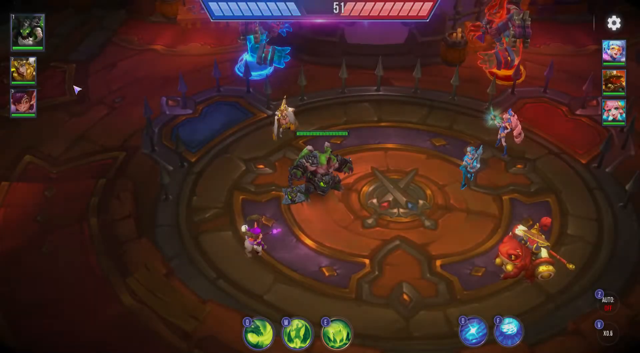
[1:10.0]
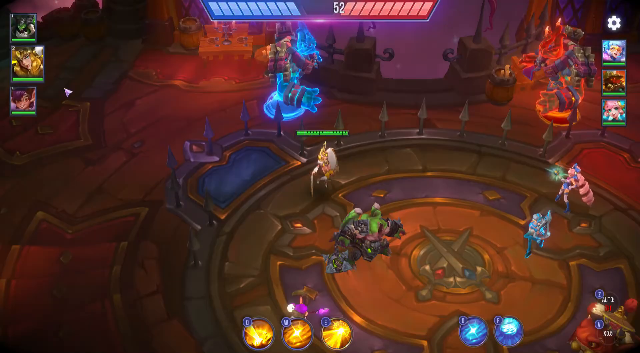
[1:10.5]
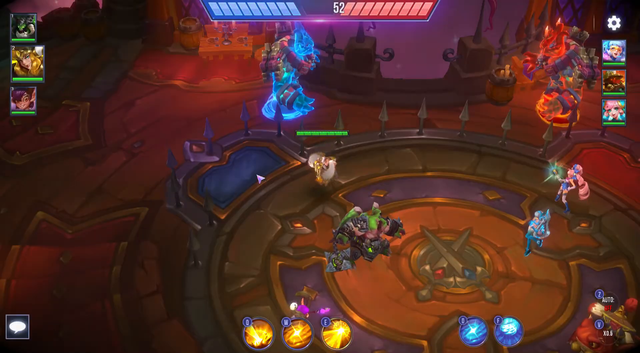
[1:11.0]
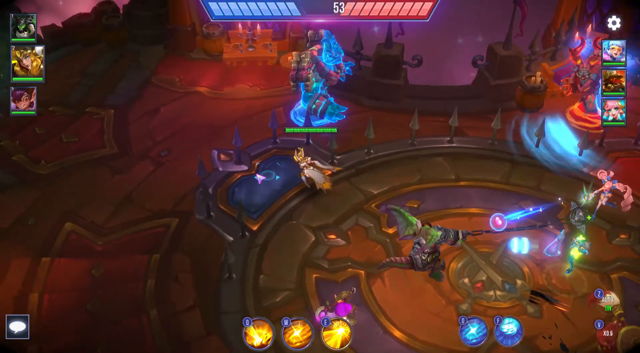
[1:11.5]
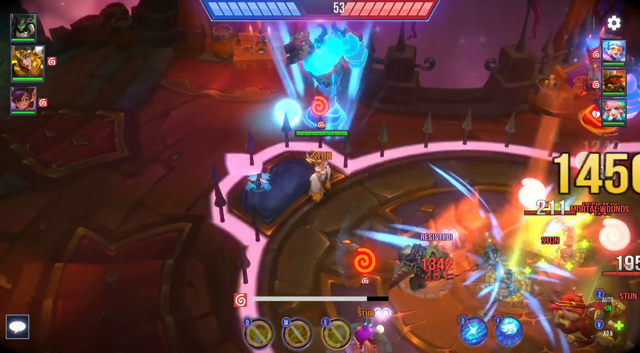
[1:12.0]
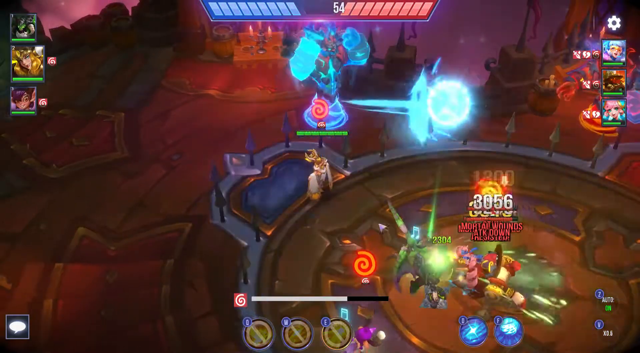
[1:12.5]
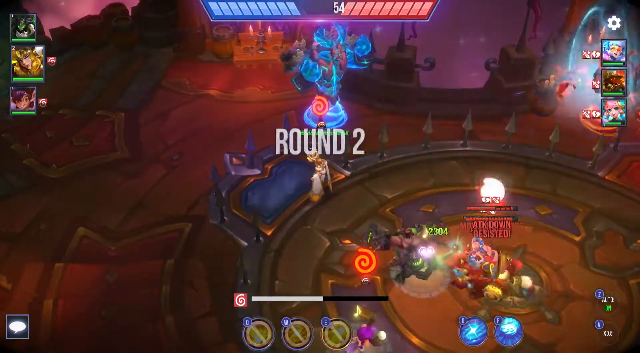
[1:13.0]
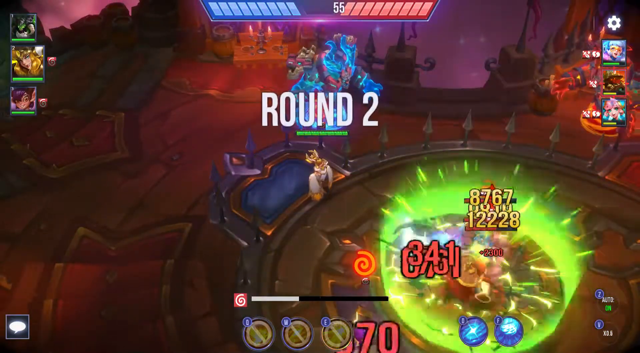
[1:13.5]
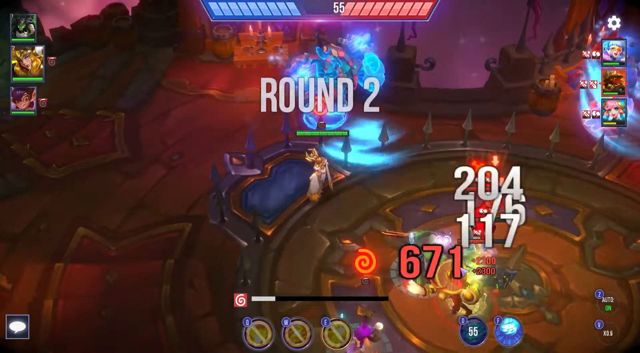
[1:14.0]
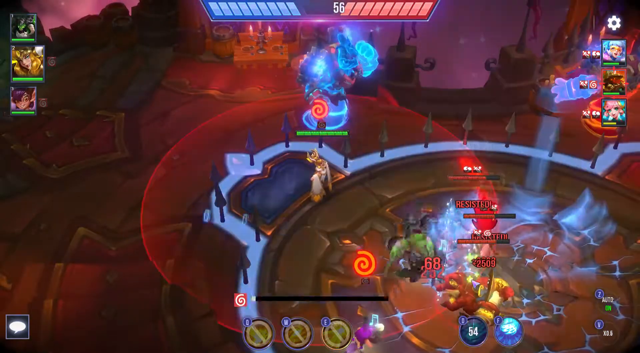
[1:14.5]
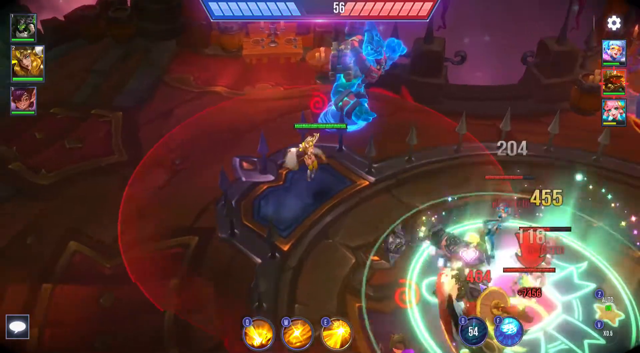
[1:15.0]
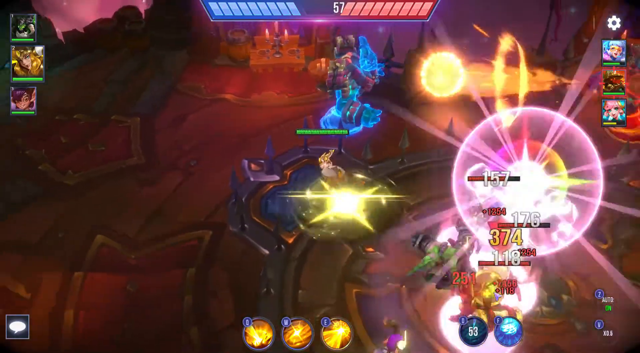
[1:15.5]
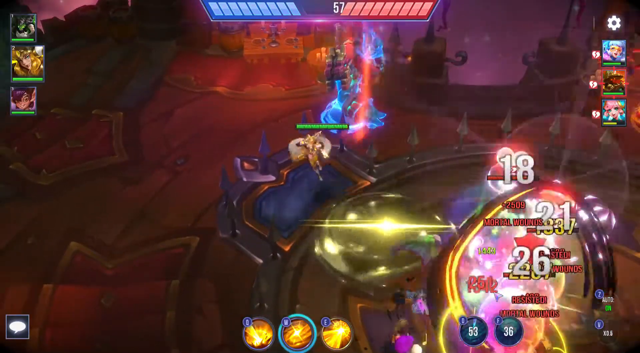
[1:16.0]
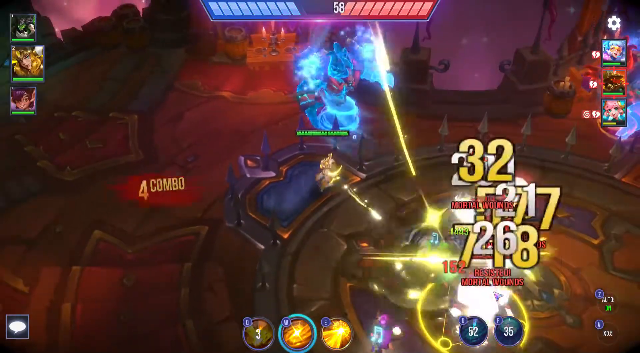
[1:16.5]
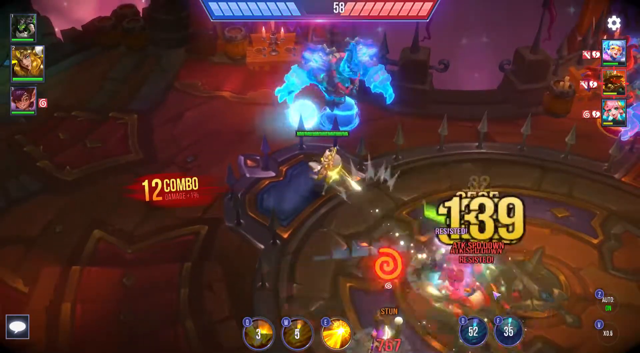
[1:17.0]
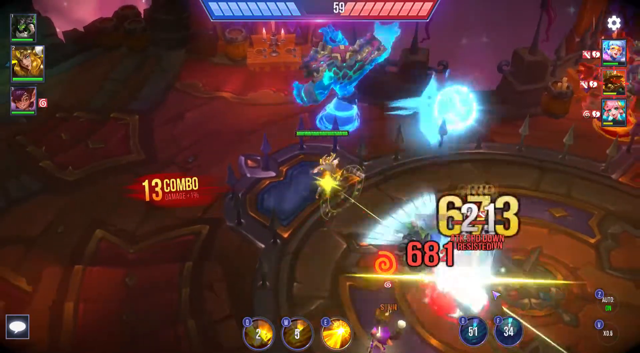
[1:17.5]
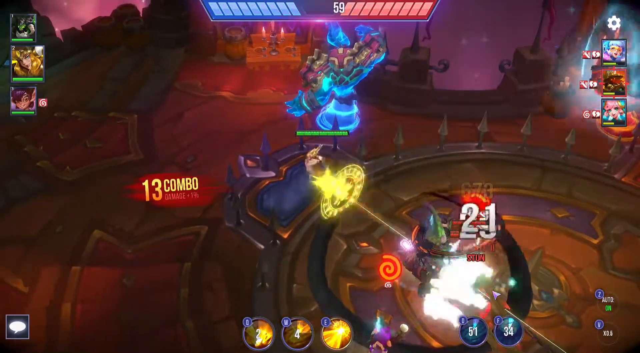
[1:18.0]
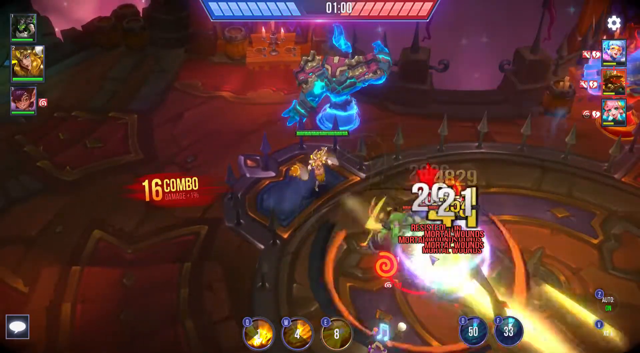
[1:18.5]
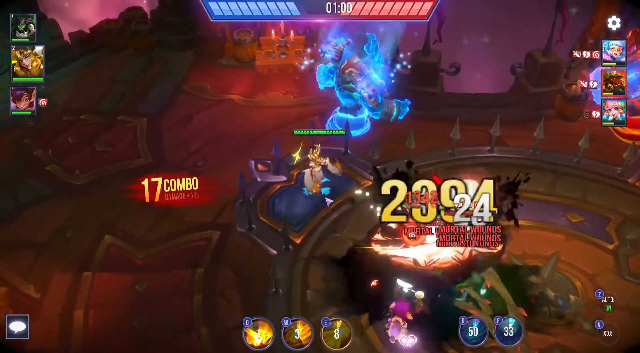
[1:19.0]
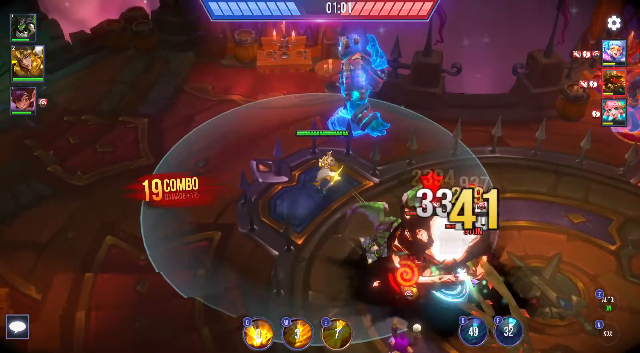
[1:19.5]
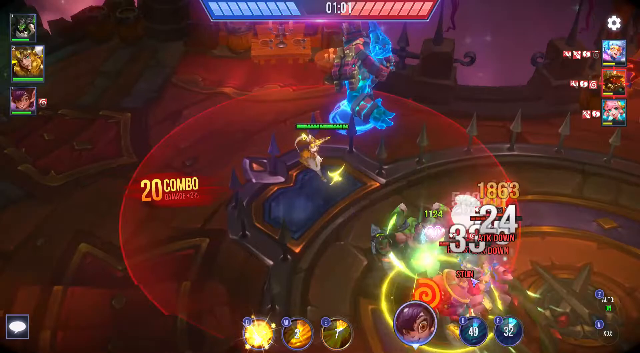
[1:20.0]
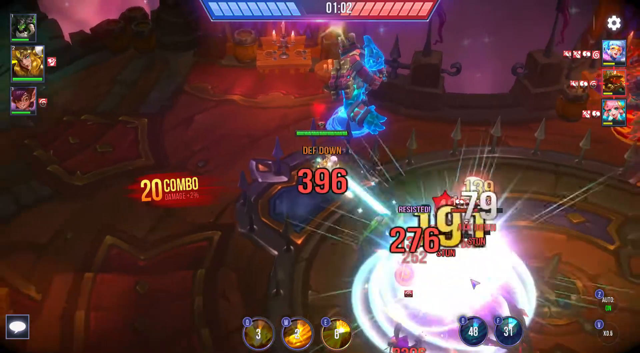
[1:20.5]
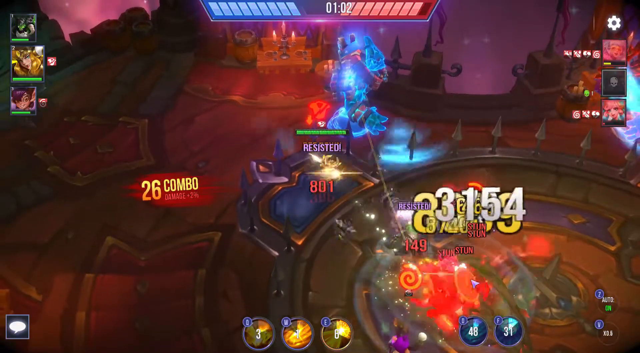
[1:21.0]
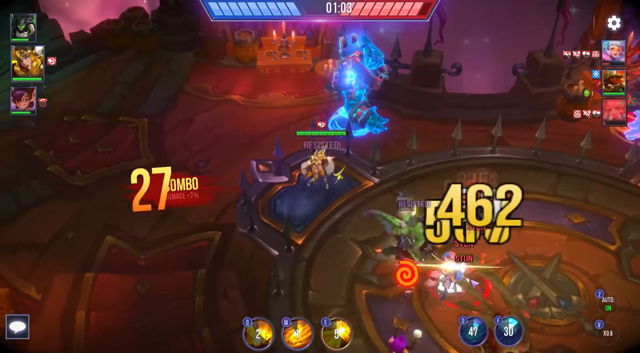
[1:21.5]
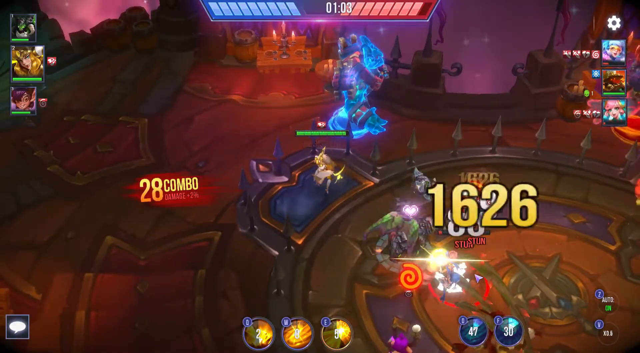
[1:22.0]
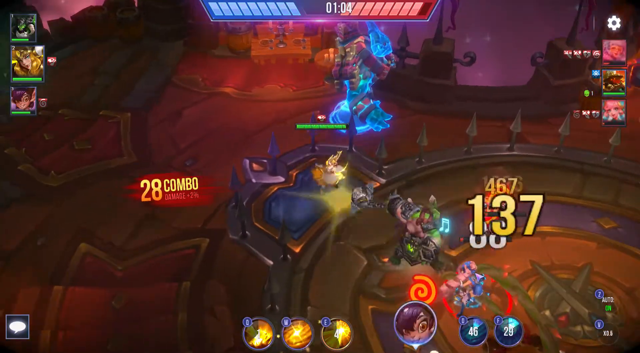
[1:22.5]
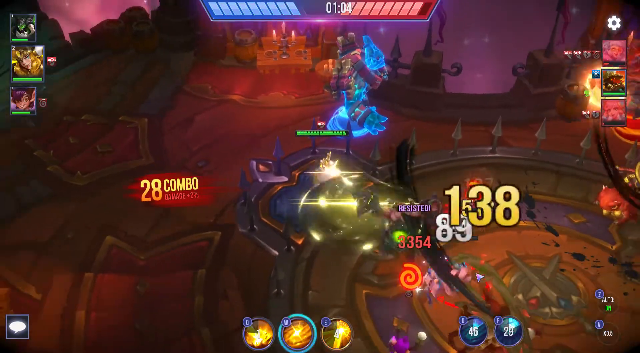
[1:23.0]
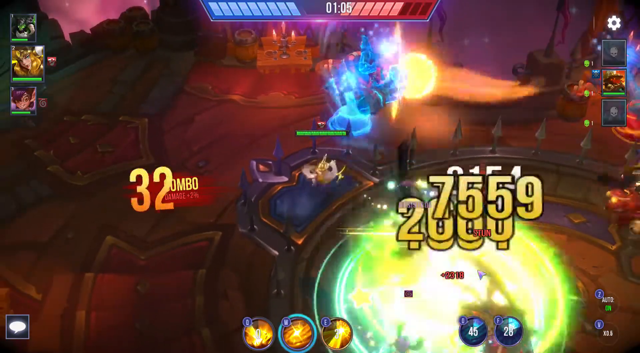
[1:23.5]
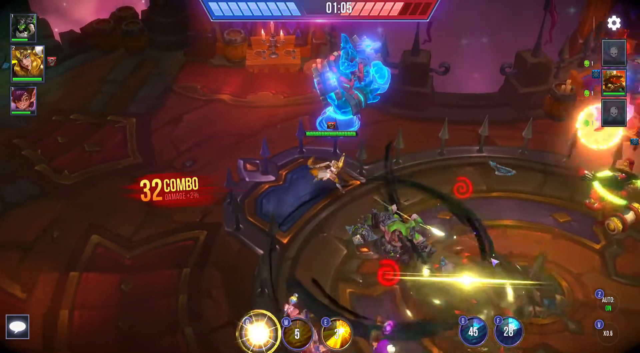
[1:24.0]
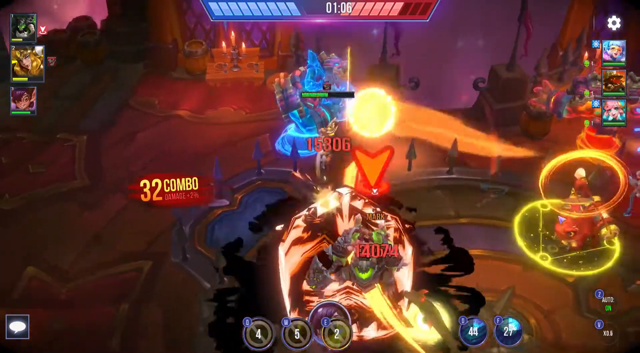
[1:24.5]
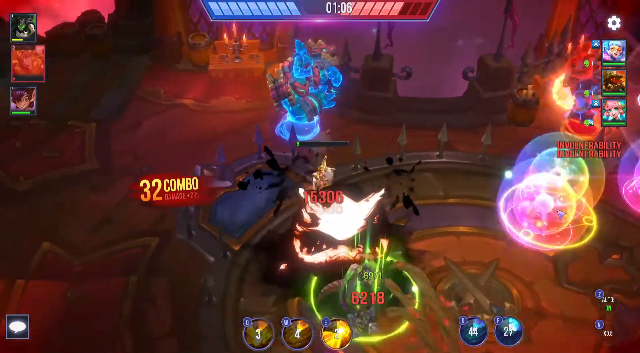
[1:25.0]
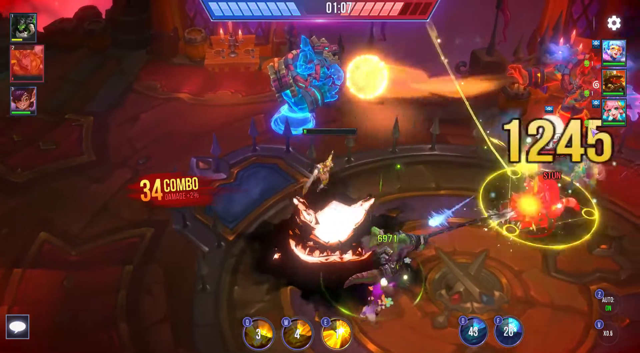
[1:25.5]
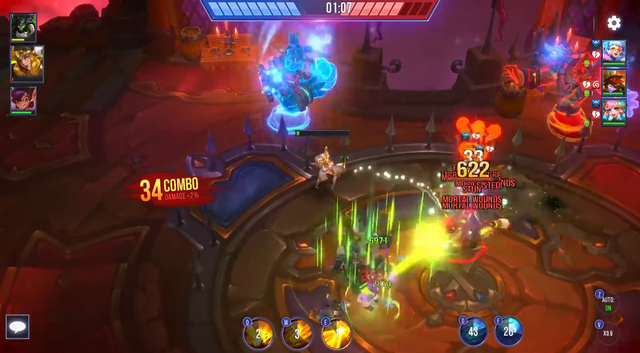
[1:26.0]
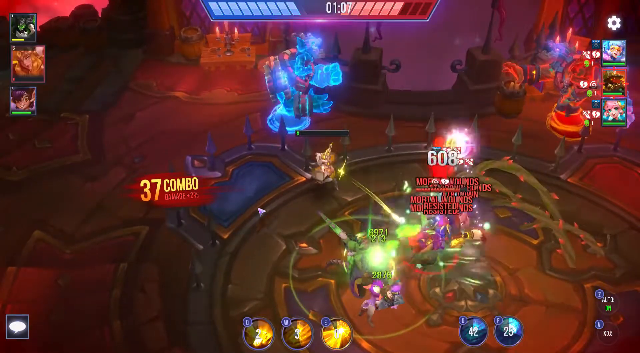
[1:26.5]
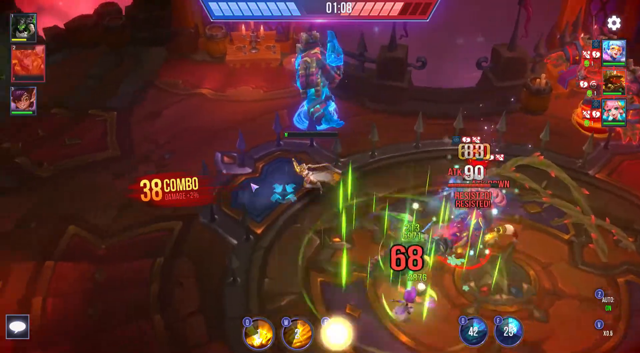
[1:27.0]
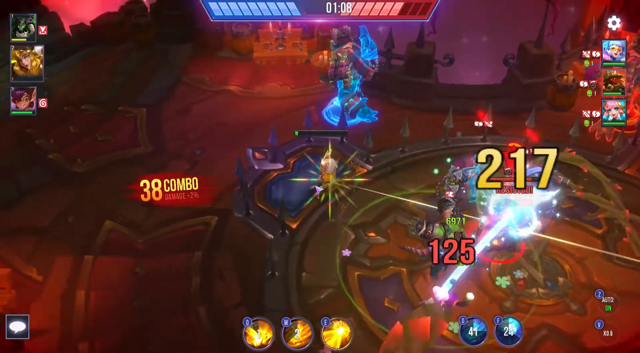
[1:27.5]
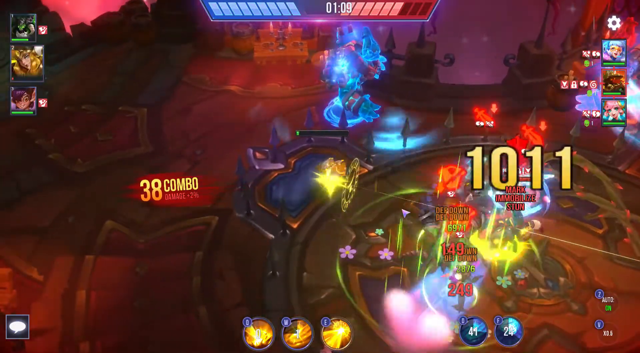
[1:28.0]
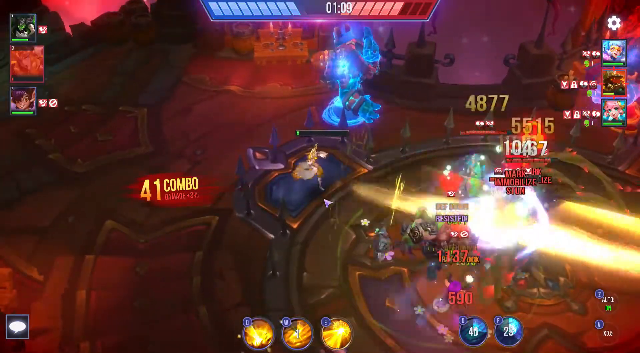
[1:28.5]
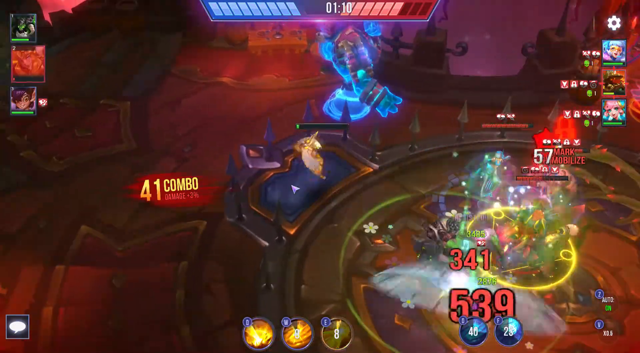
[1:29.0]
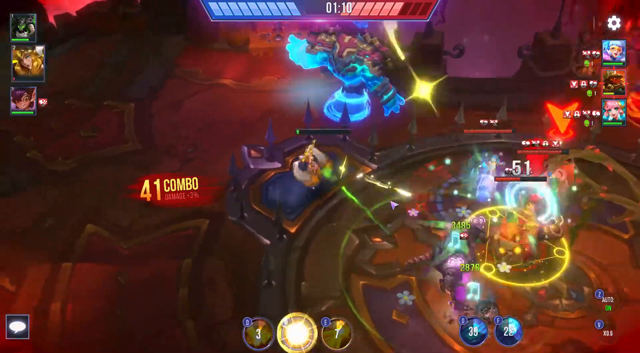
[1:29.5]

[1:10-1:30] A streamed video game shows the middle of a battle with what appear to be two or more main characters. The game is fast, with so many of what are probably energy beams being fired at each other that it is hard to tell main characters from non-playing characters generated by the game. At least two characters seem to be fighting each other in the center of a ring, and in the back there are probably two to four other characters. The ring is a big, ornate-looking circle with two swords in the middle of it. There is a scoreboard, with one side that looks like it has red light and the other blue. The characters fight each other and sometimes seem to switch off and take on other fights.